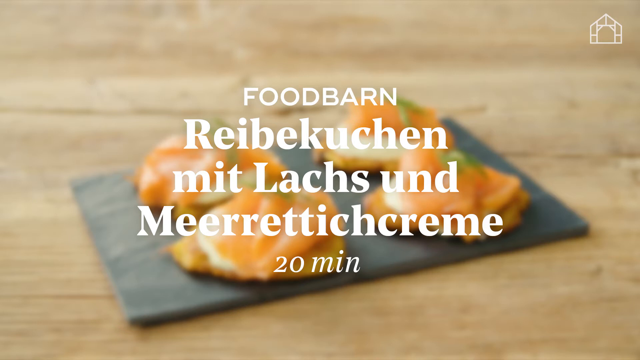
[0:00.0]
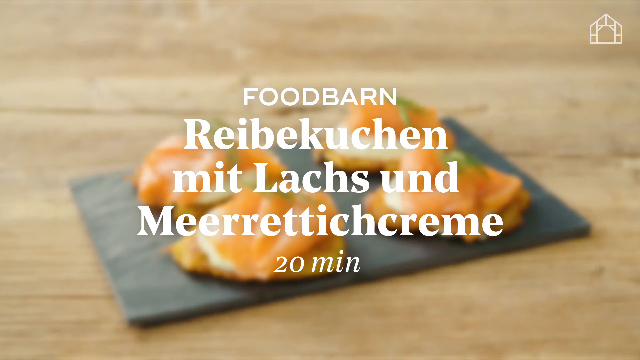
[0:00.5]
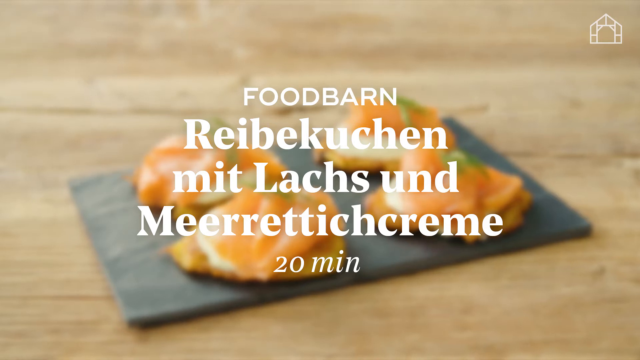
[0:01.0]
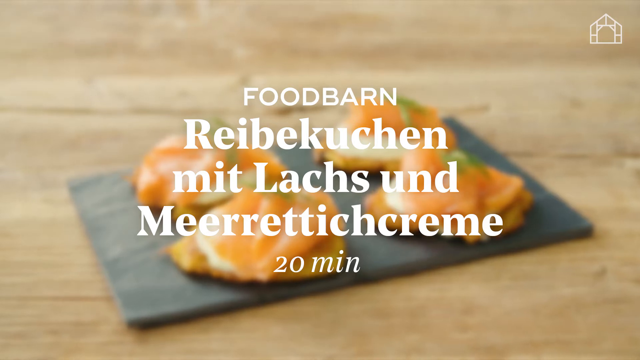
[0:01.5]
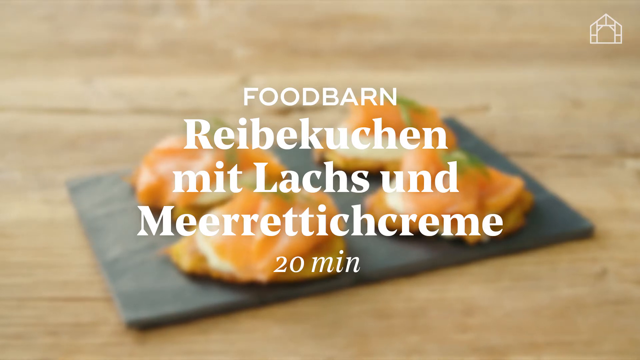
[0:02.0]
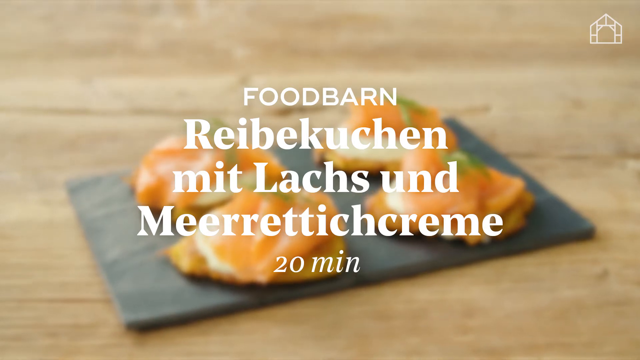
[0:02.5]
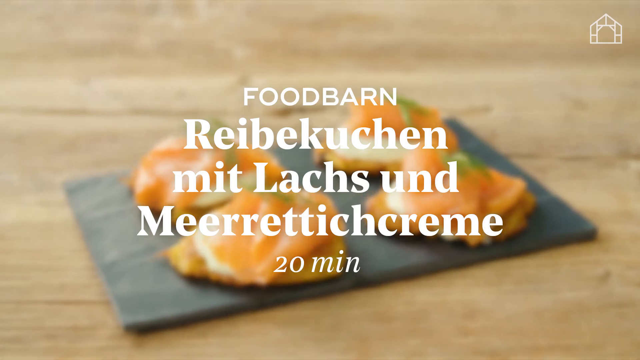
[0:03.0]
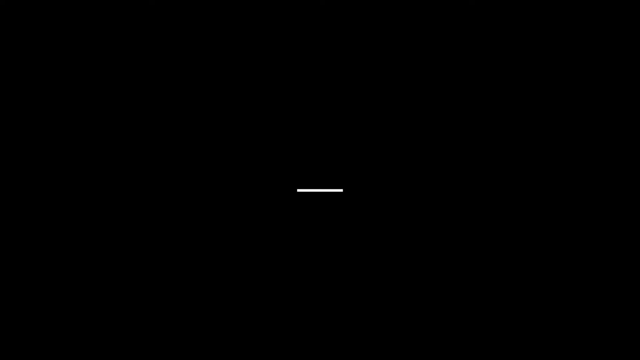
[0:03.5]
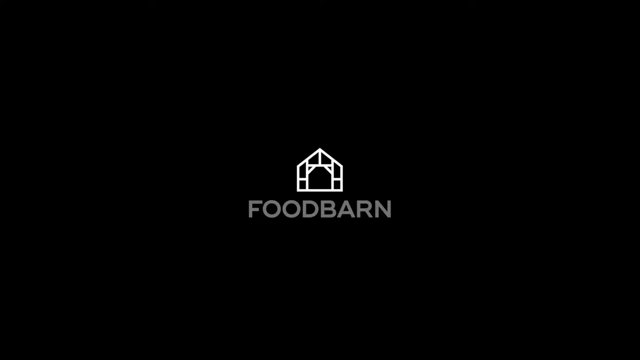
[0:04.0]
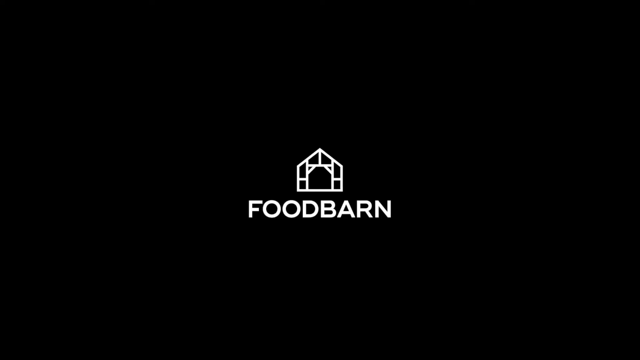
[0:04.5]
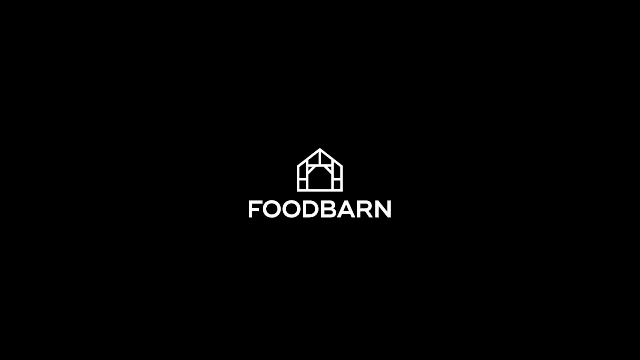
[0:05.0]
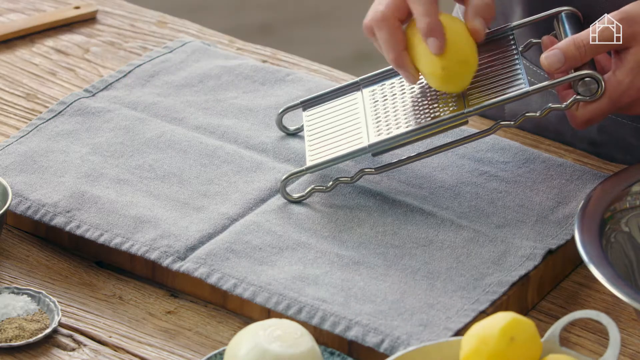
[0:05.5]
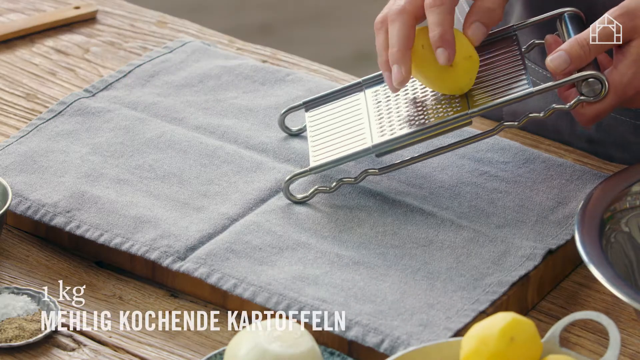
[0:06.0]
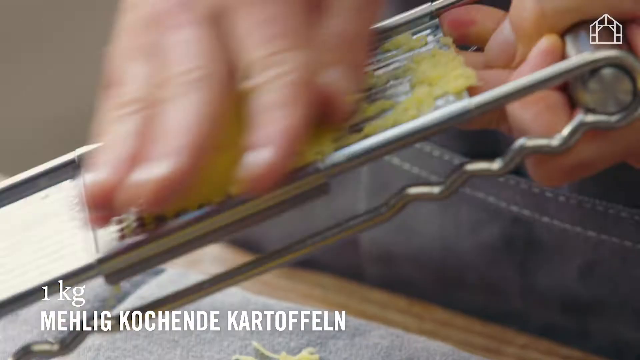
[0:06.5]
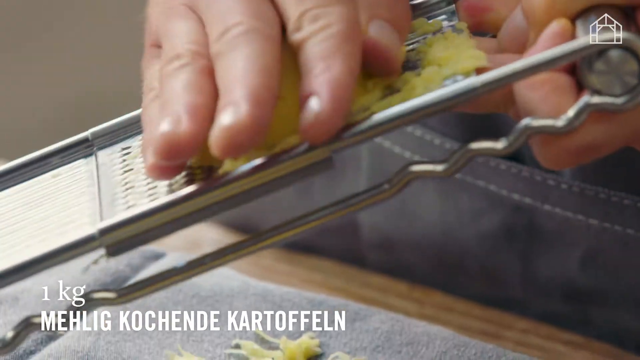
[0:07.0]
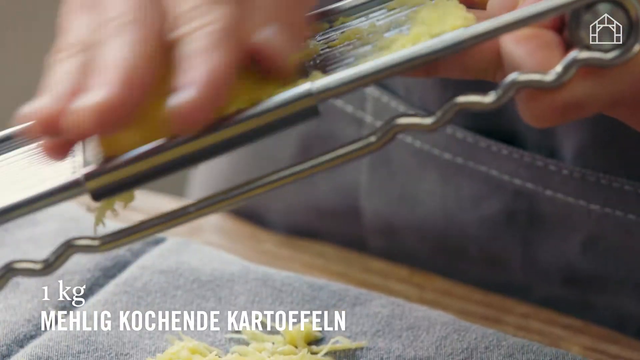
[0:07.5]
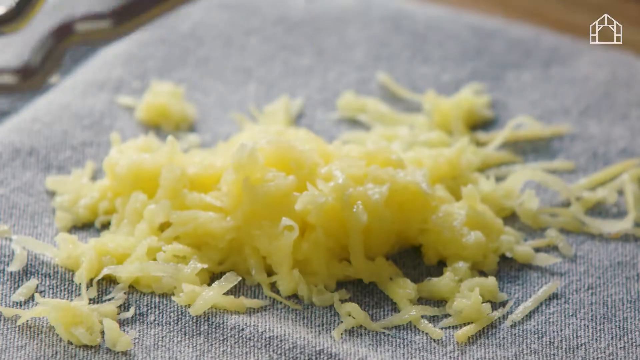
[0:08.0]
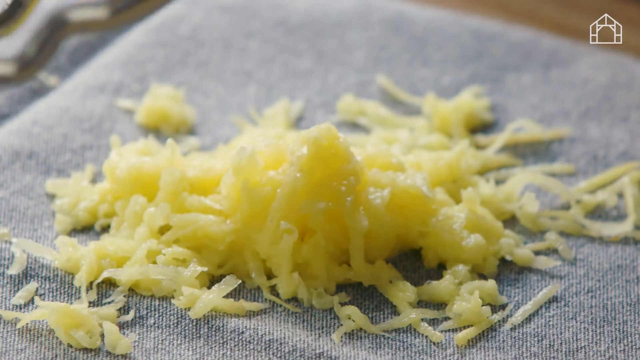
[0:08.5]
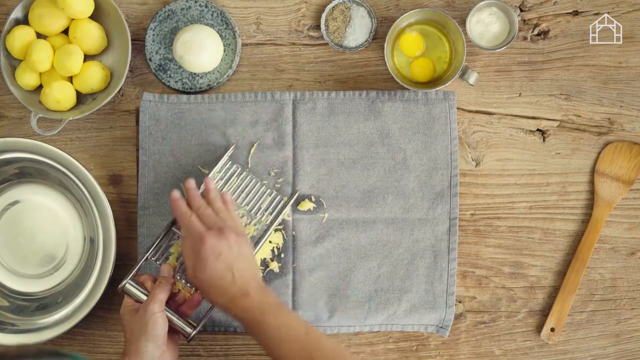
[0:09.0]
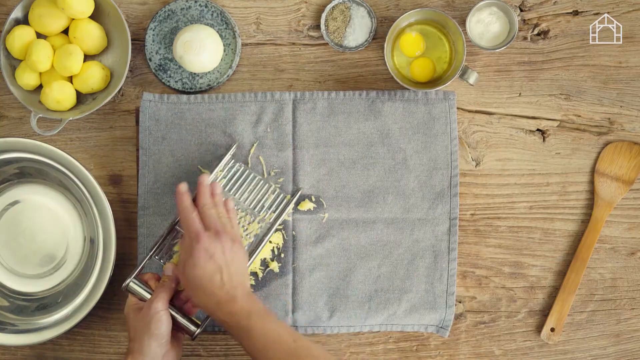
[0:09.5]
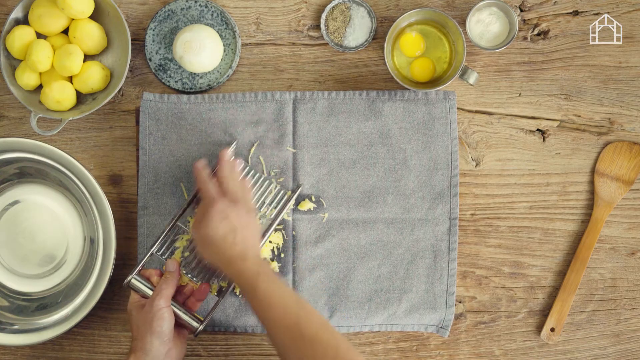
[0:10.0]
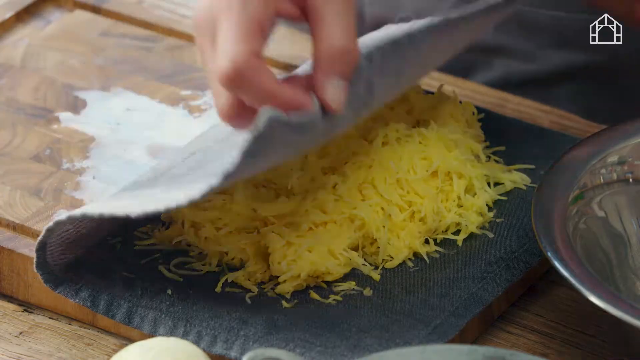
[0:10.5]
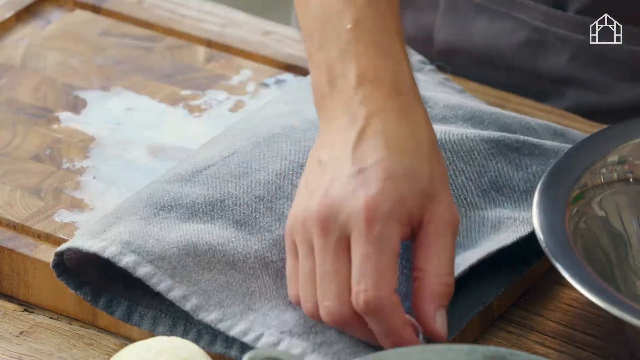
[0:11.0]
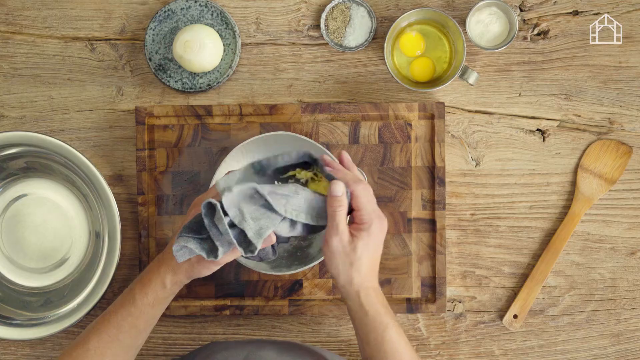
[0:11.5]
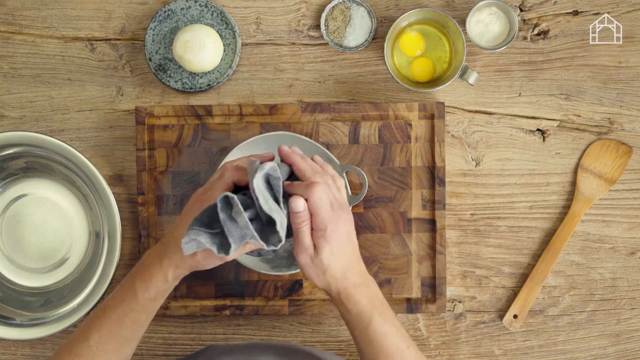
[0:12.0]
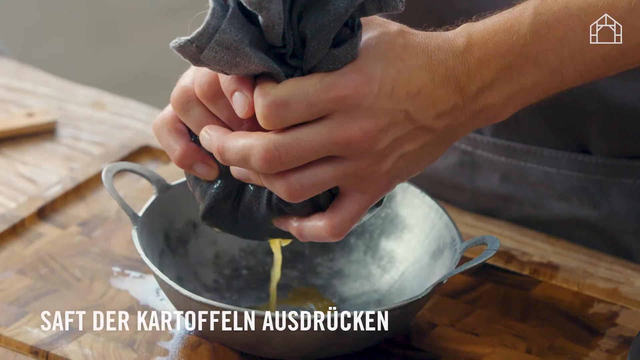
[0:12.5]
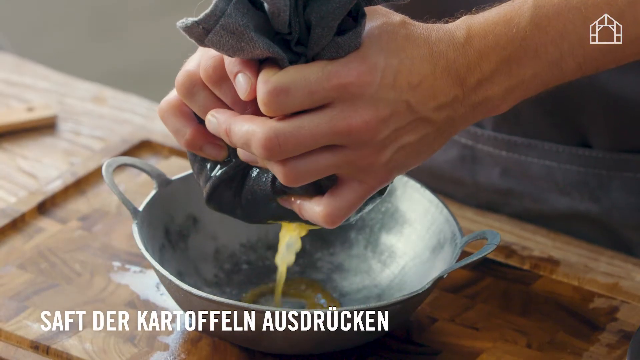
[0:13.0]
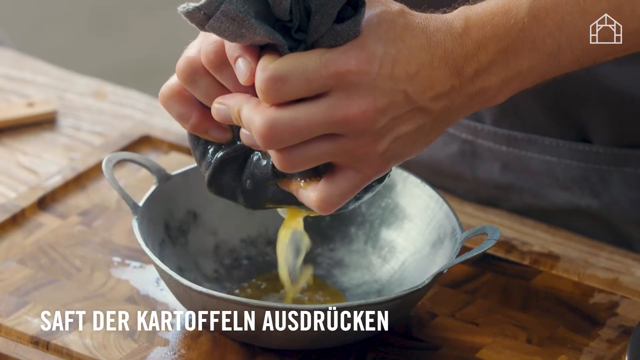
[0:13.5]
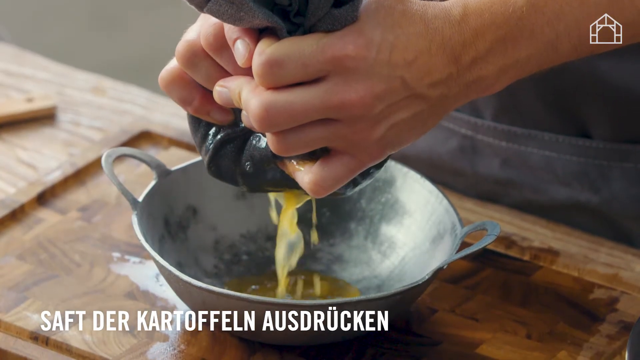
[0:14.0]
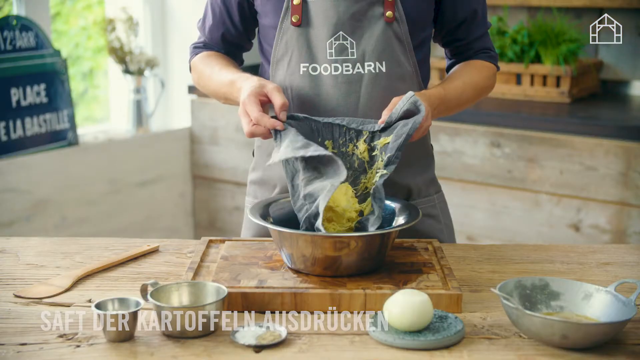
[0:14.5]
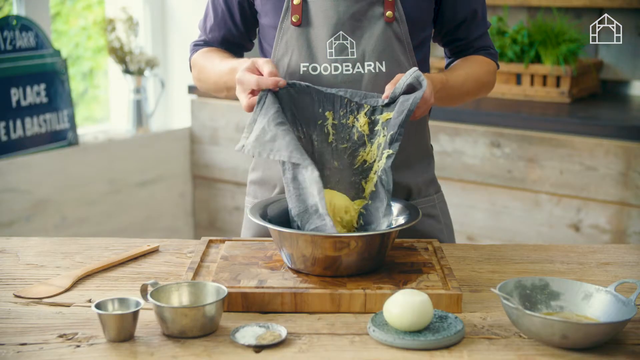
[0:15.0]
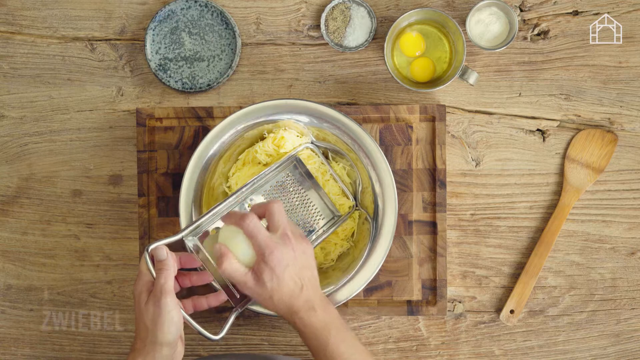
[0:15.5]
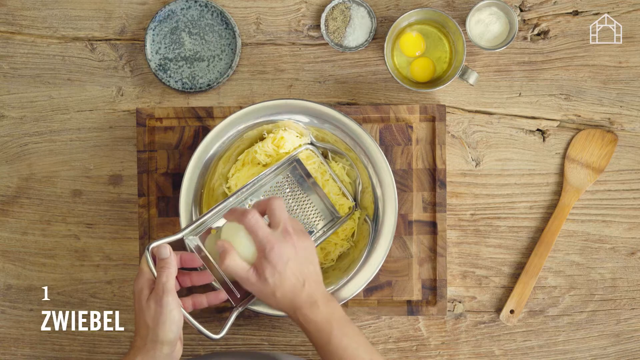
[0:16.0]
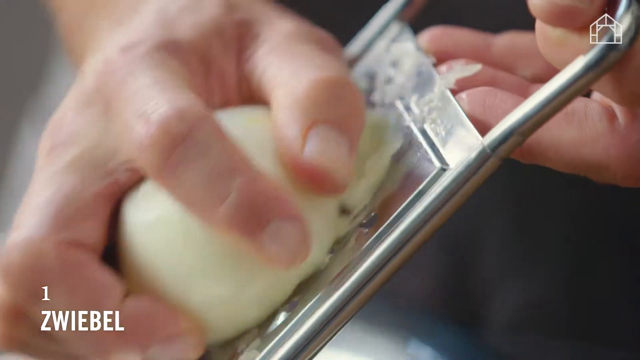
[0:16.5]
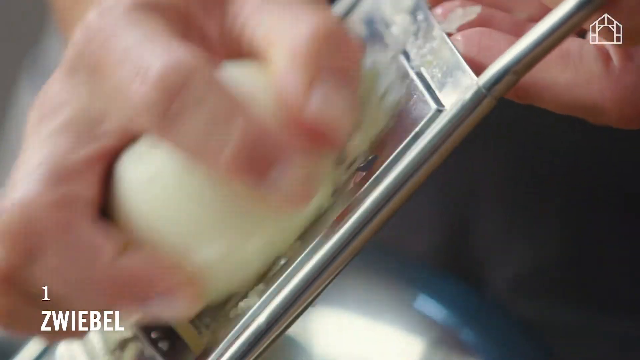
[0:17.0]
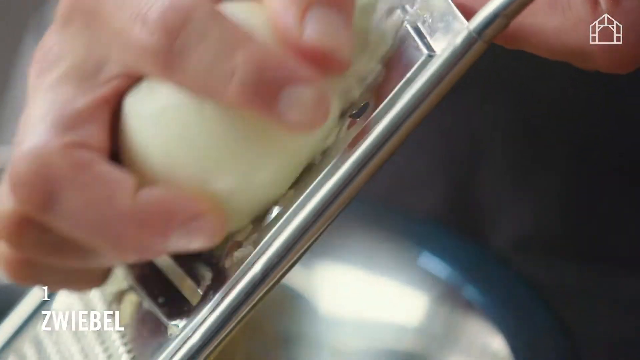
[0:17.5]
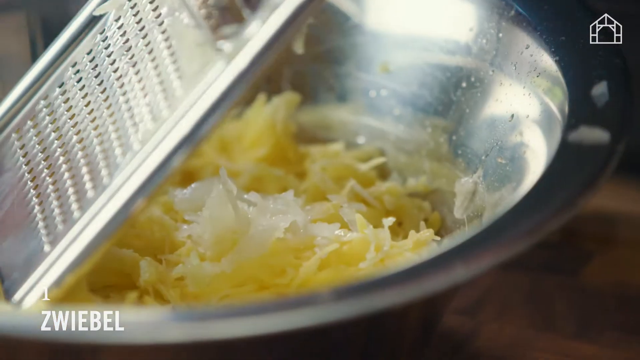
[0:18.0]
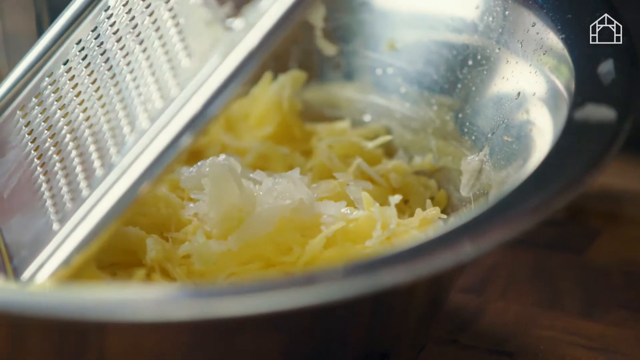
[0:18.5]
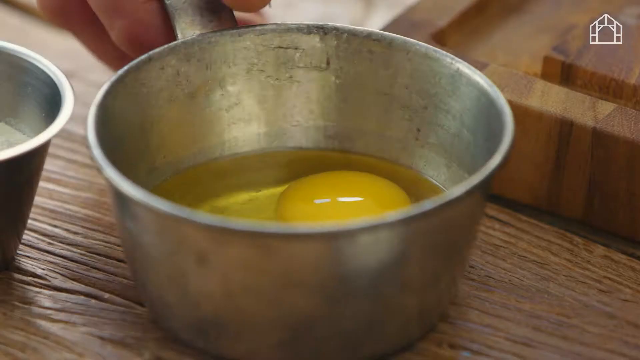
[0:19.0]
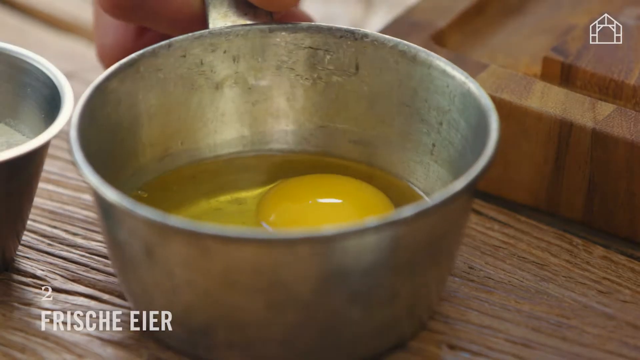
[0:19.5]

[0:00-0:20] The video opens on a still image of four baked goods on a slate-colored cutting board or tray on a wooden counter or table. Text over the image reads "food barn," with some words in German and "20 minutes" underneath. The Food Barn logo and words appear next. In a close-up, hands use a flat metal grater to shred potatoes onto a gray hand towel, with the word "Kartoffeln" identifying them as potatoes. The hands fold the towel over the shredded potatoes, bring it together and squeeze the liquid out into a bowl, then dump the shredded potatoes into a different bowl. A hand grates more into the bowl, apparently an onion, and then a hand picks up a measuring cup or dish with egg in it.